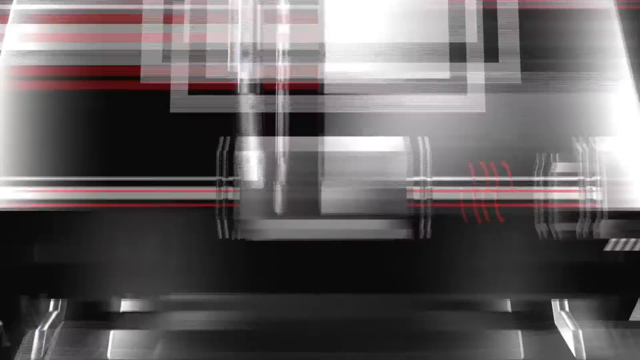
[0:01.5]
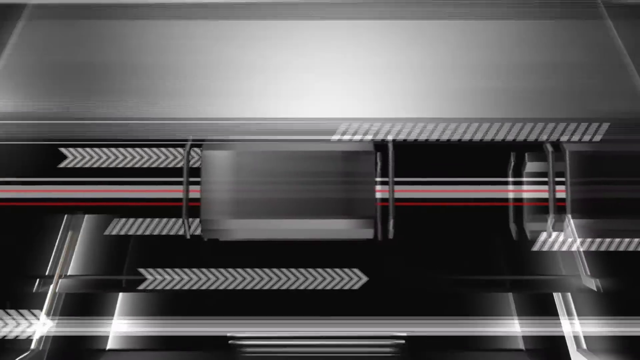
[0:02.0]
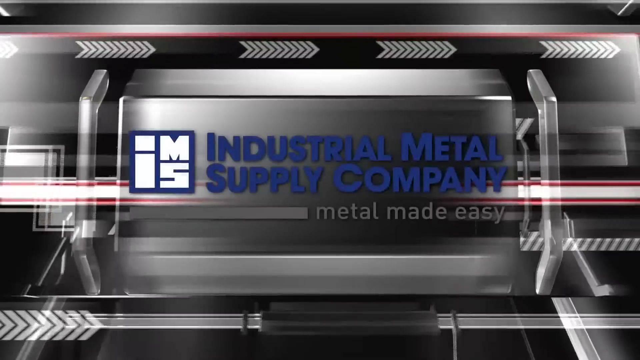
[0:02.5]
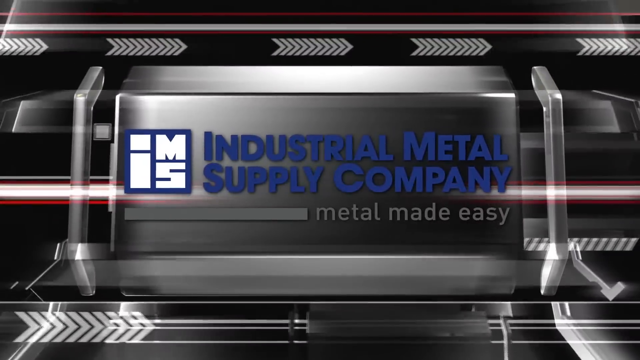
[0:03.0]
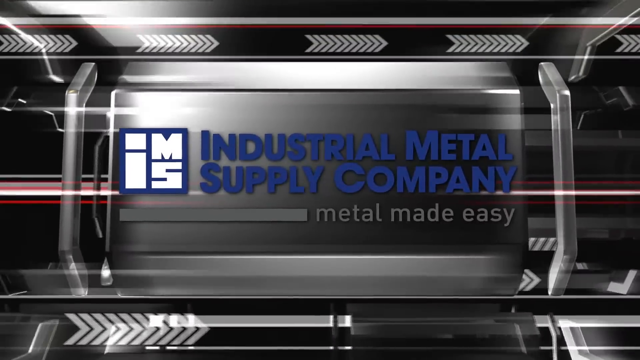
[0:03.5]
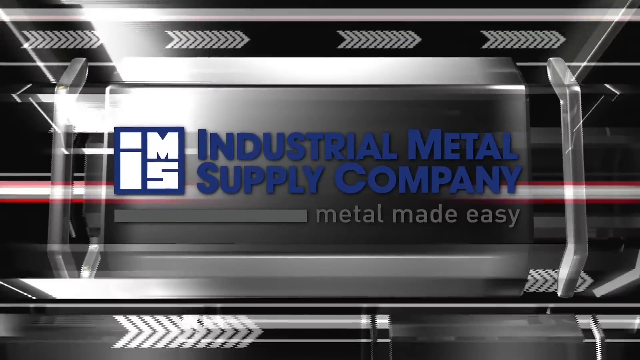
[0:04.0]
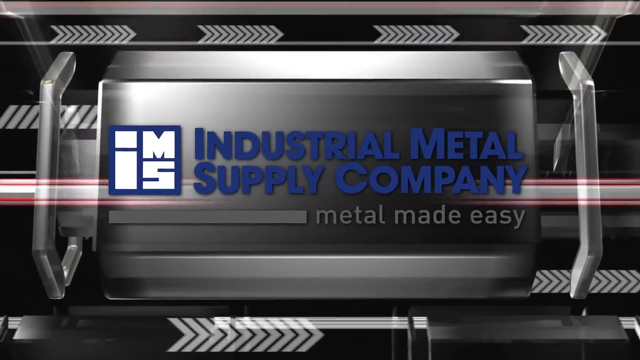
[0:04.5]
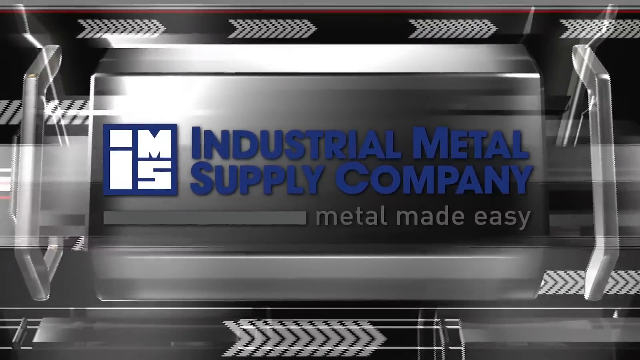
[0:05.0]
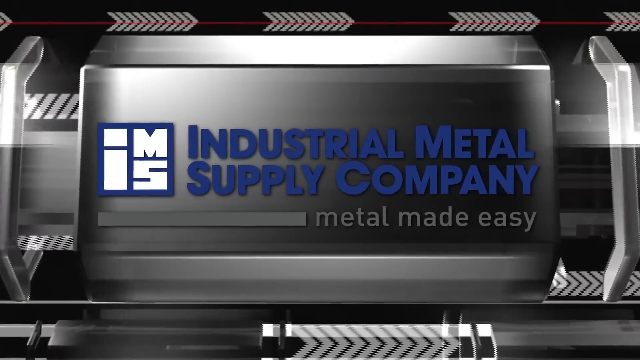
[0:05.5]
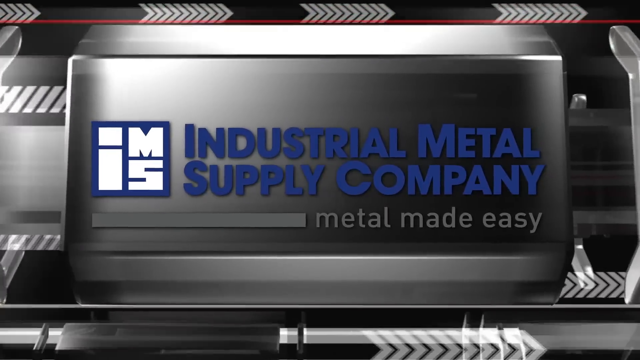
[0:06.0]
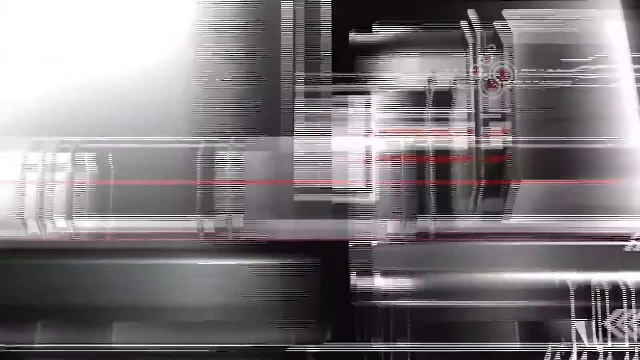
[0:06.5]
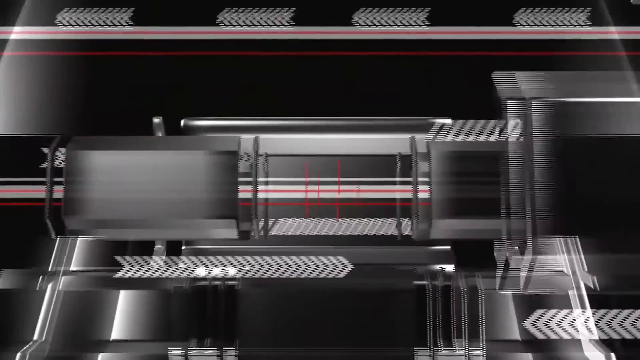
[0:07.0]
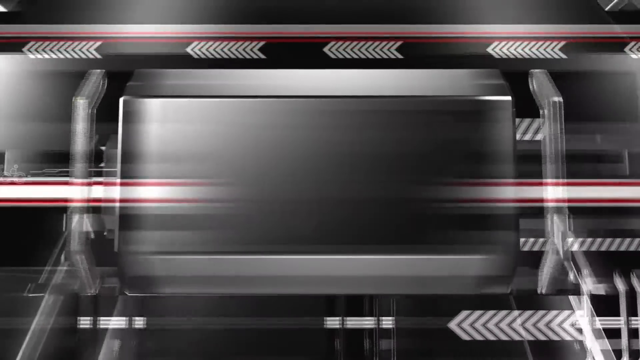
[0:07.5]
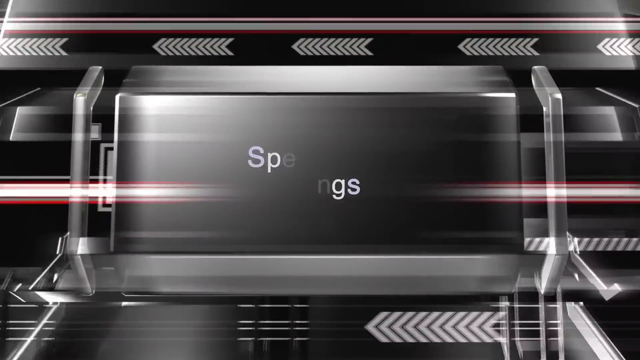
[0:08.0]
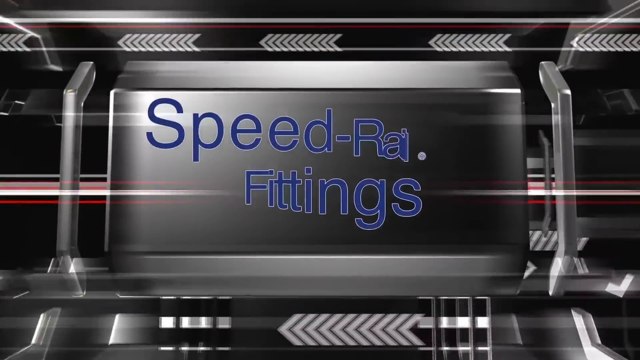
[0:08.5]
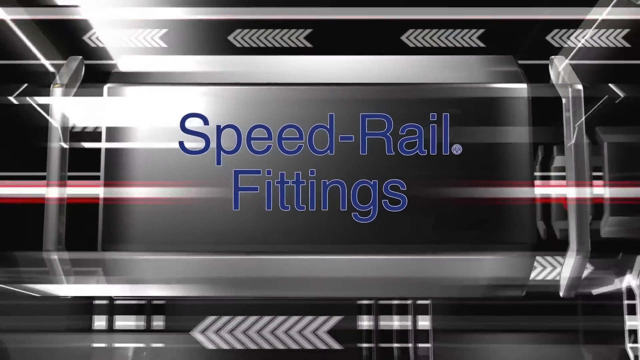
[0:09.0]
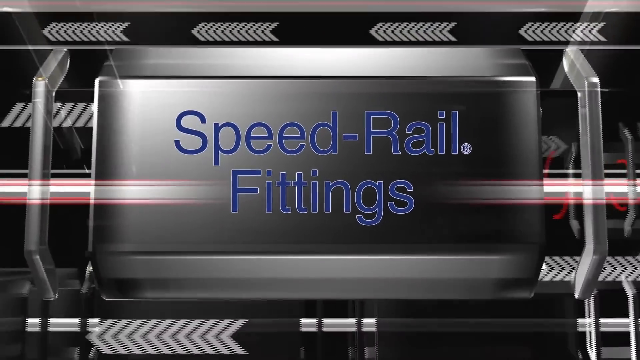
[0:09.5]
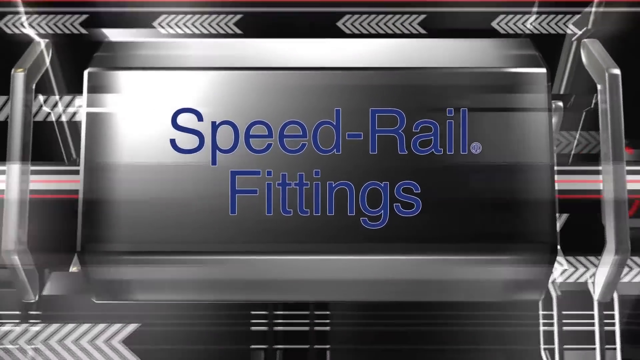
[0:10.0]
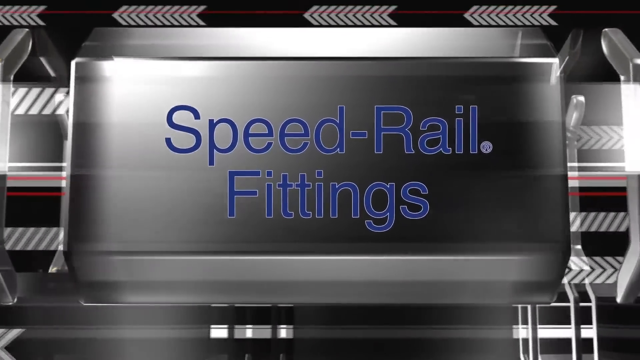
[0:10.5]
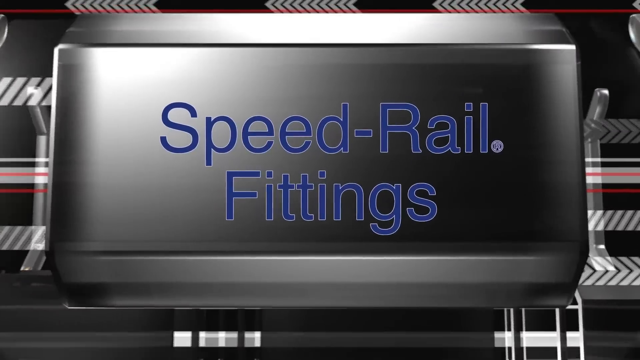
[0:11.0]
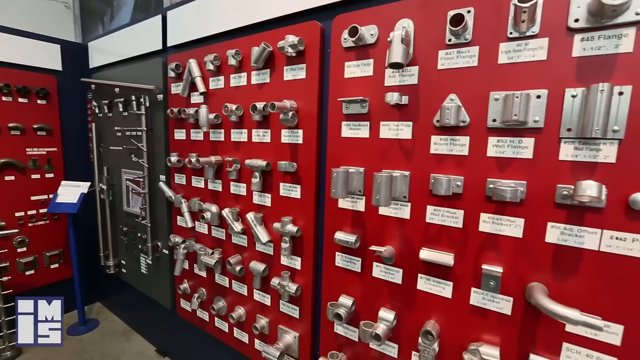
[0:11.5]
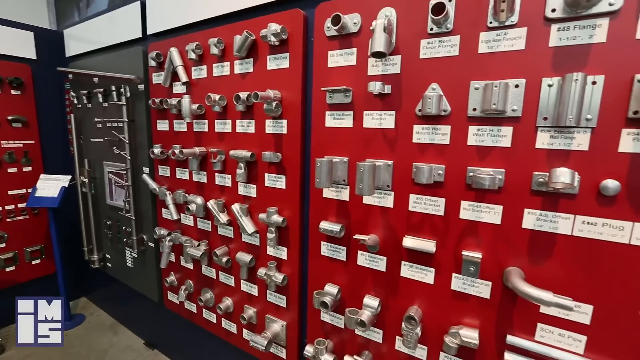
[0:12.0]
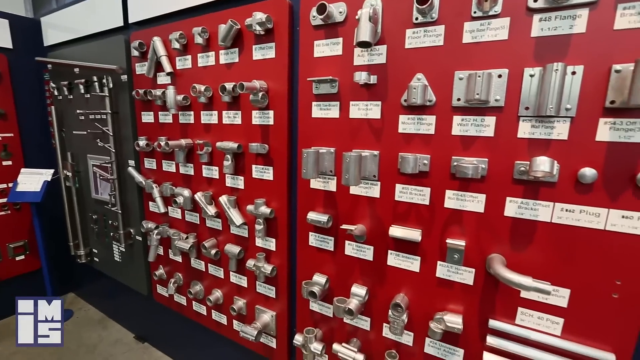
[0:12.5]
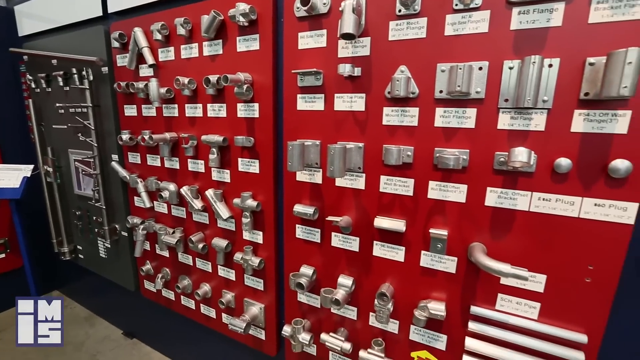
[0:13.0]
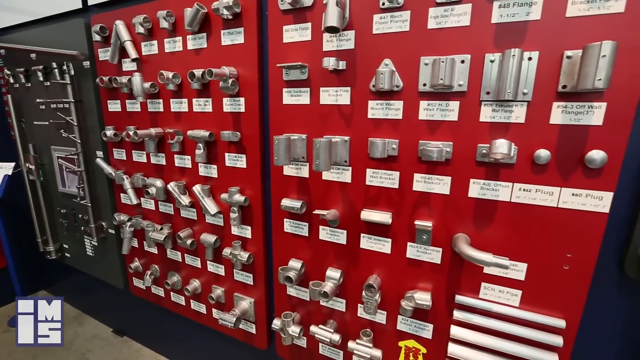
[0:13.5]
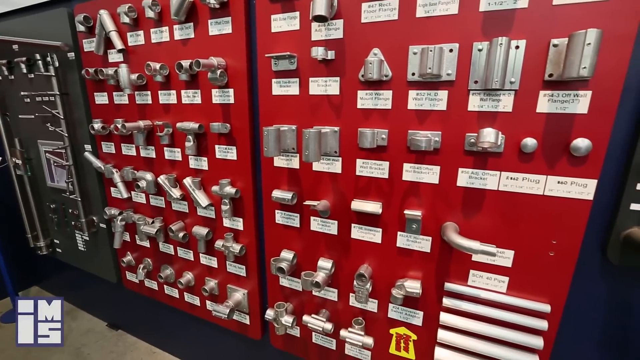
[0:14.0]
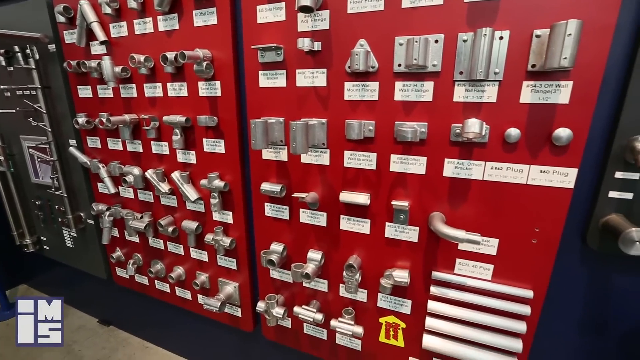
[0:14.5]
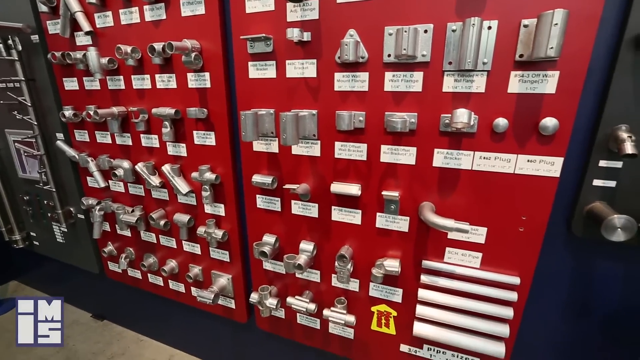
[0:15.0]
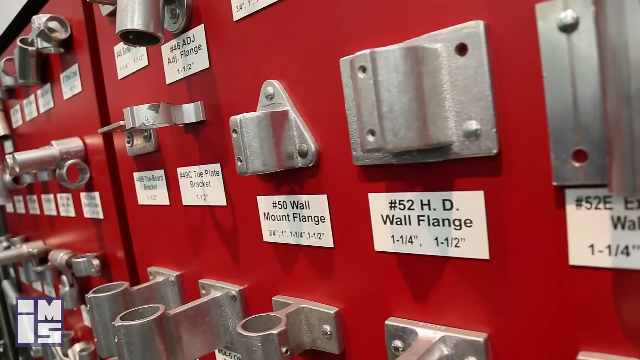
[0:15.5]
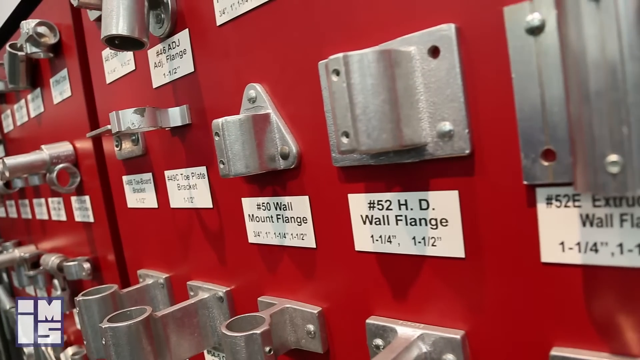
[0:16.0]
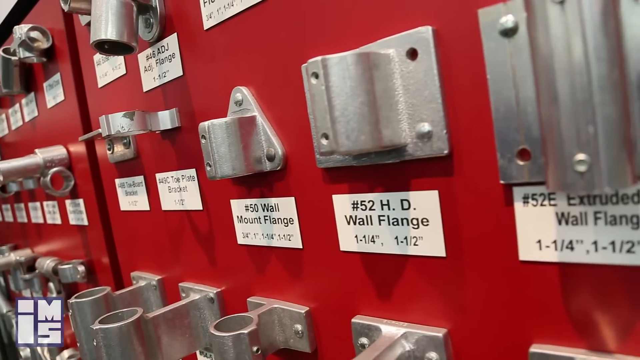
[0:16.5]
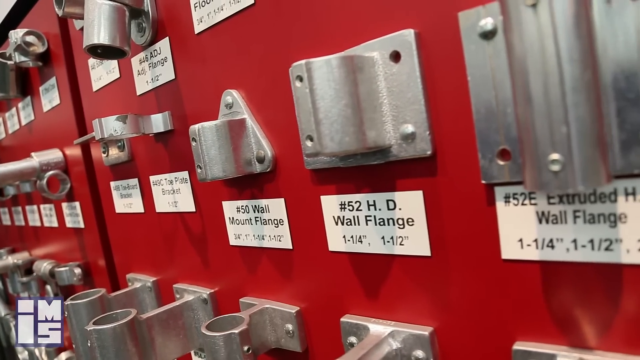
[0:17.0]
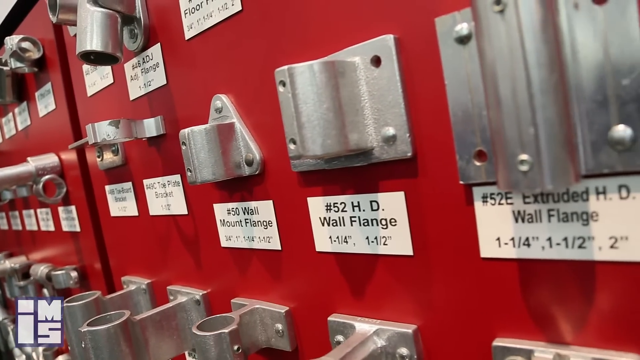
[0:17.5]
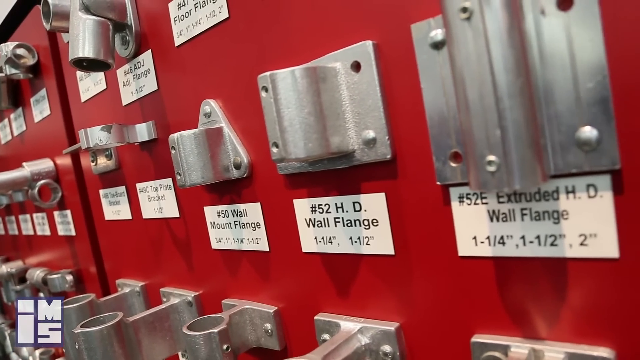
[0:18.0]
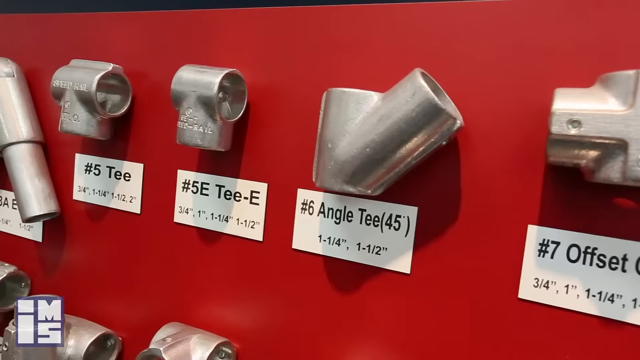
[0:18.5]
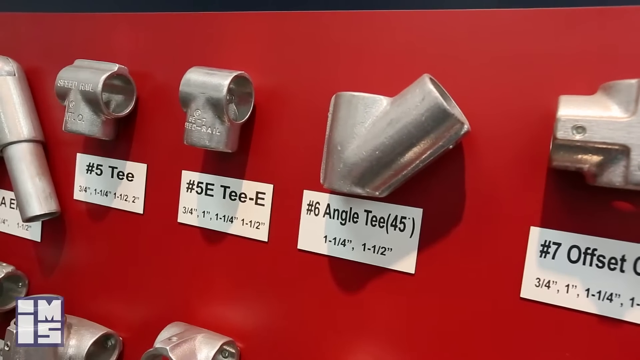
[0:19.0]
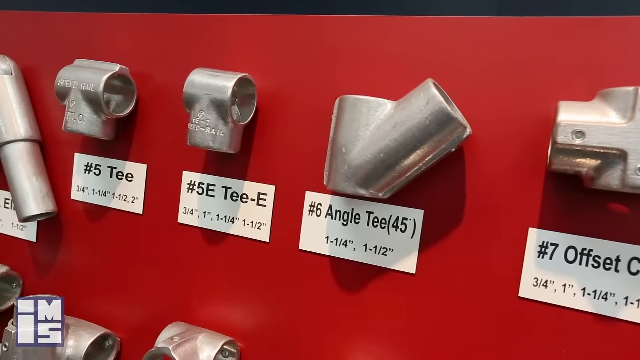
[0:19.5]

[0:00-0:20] An industrial metal supply company is shown, with a logo that says "metal made easy". The video shows the company's products, such as speed rail fittings, along with its store and the different types of products it provides.